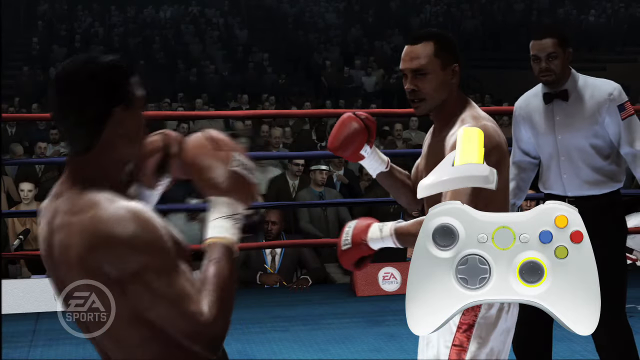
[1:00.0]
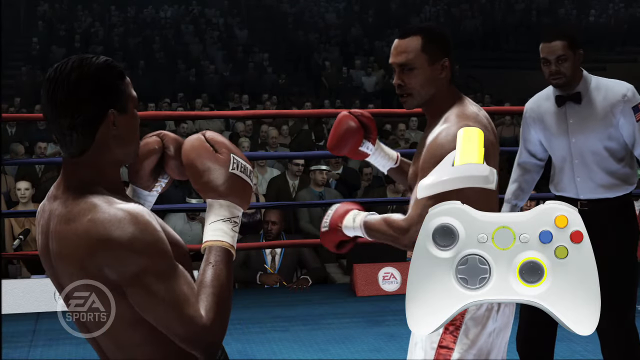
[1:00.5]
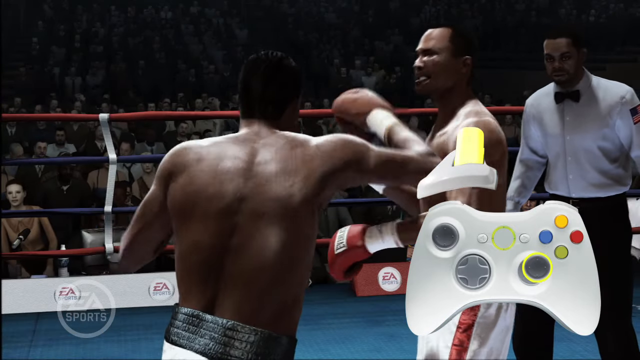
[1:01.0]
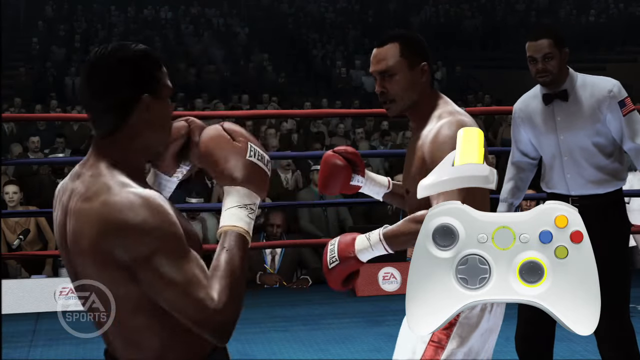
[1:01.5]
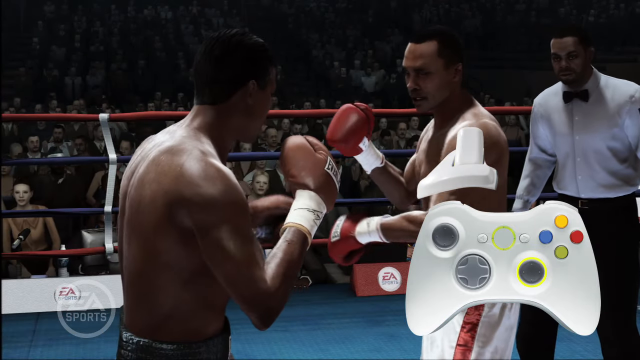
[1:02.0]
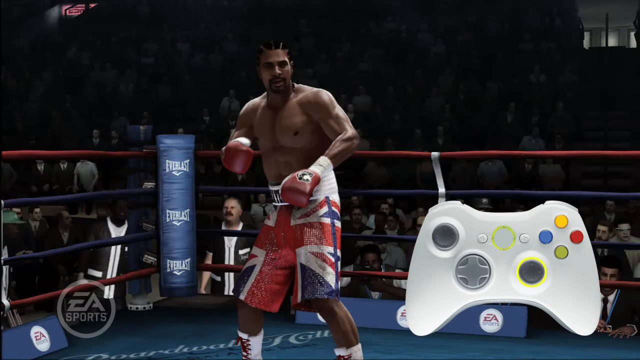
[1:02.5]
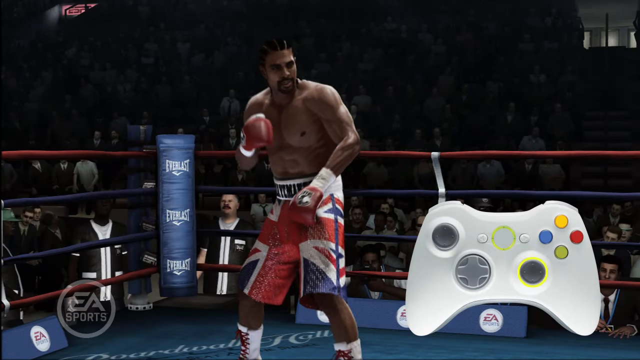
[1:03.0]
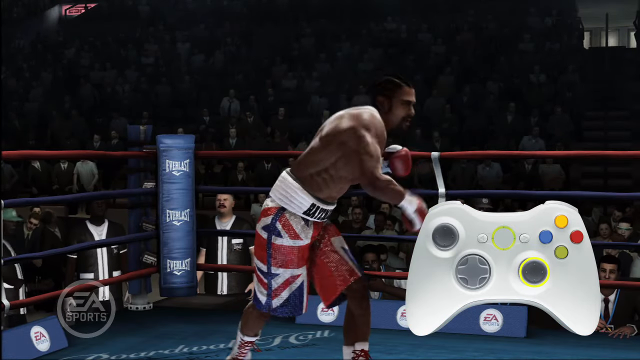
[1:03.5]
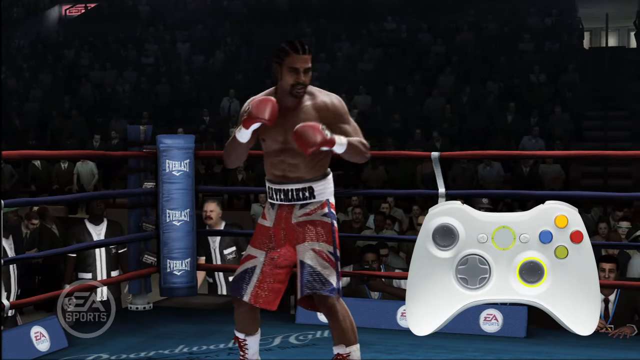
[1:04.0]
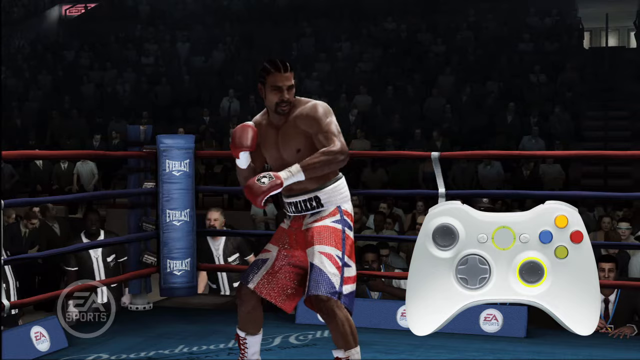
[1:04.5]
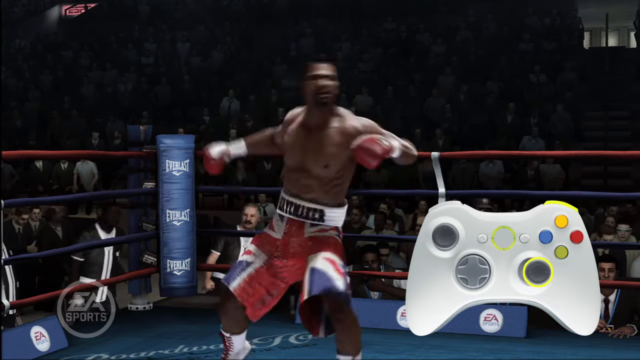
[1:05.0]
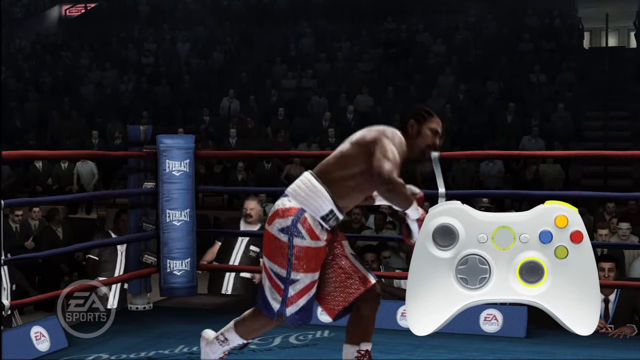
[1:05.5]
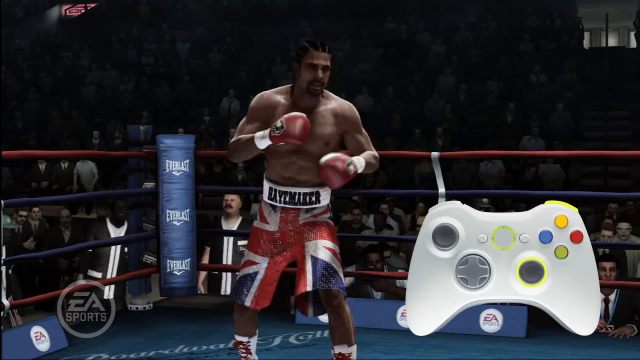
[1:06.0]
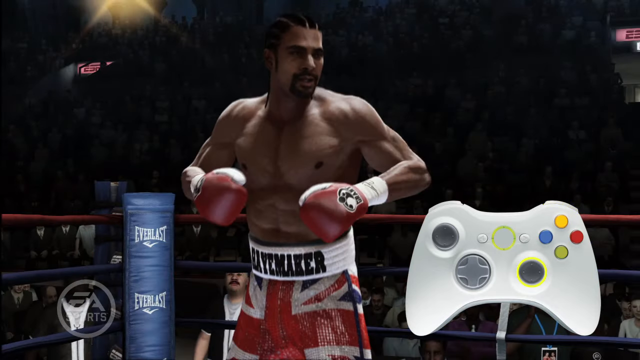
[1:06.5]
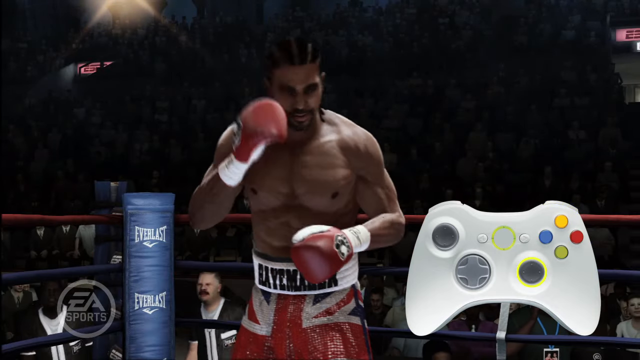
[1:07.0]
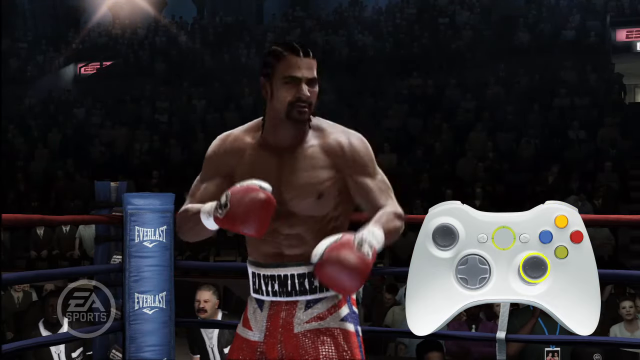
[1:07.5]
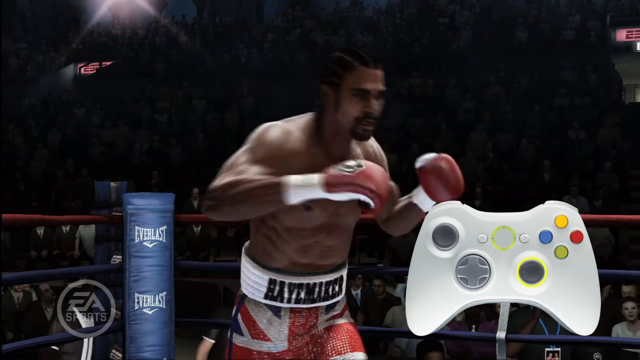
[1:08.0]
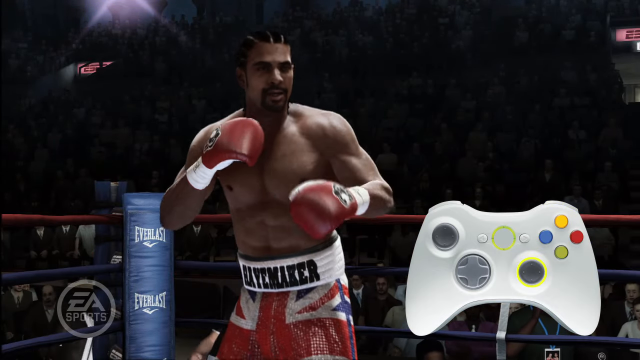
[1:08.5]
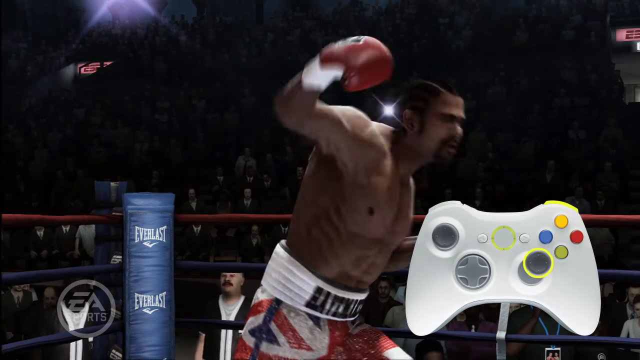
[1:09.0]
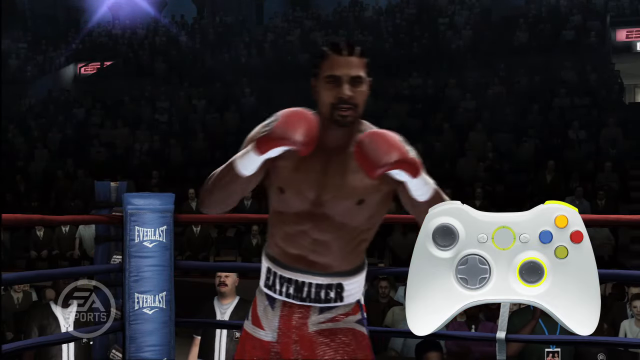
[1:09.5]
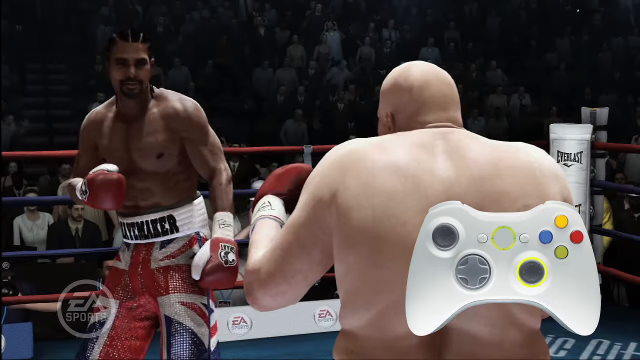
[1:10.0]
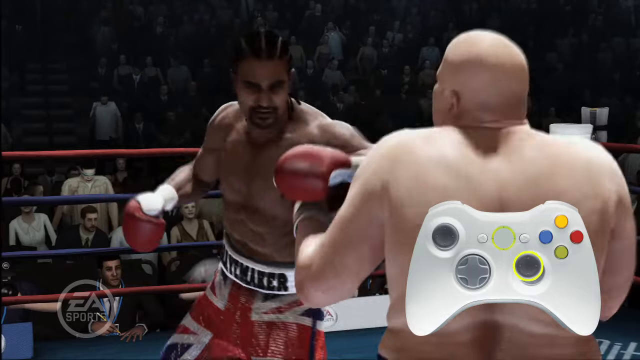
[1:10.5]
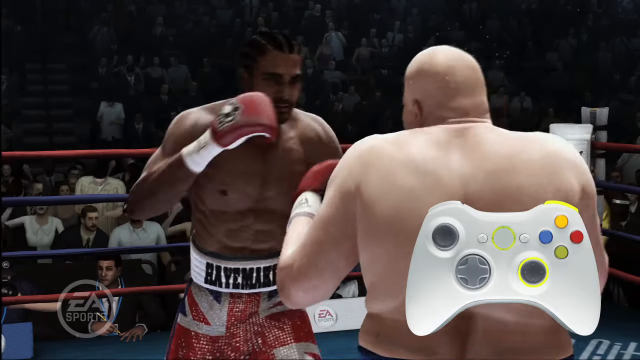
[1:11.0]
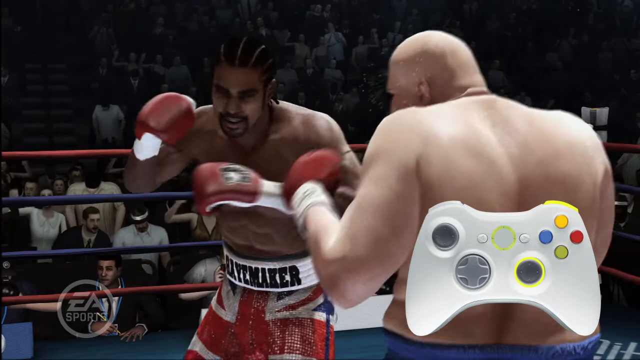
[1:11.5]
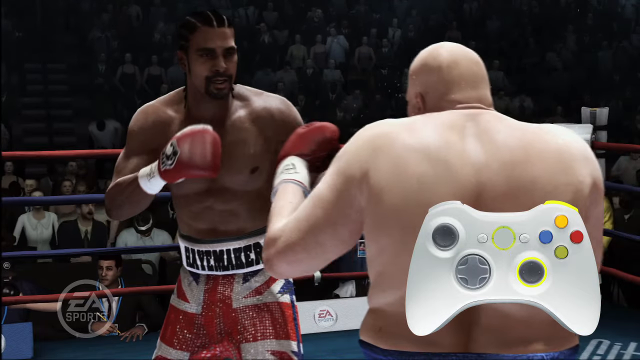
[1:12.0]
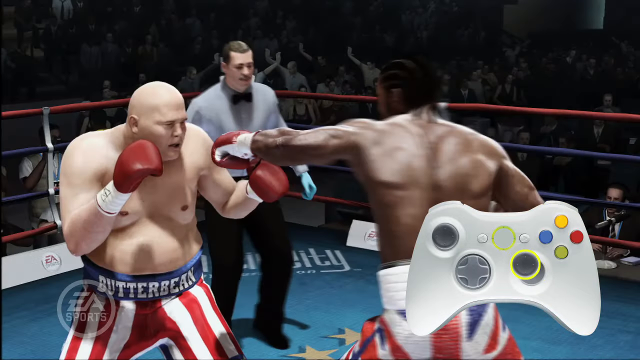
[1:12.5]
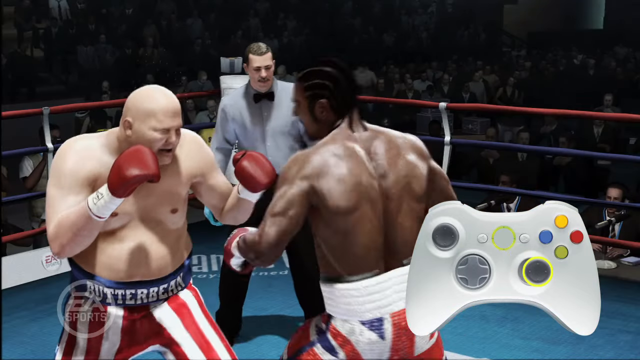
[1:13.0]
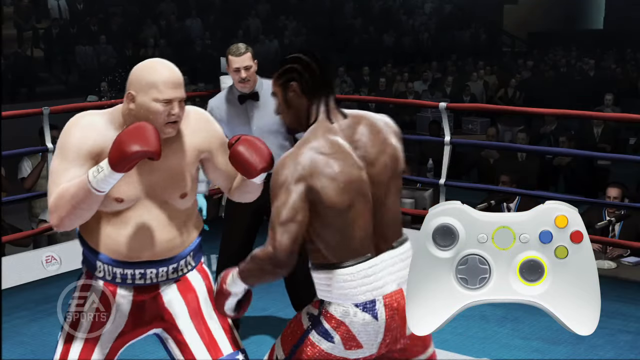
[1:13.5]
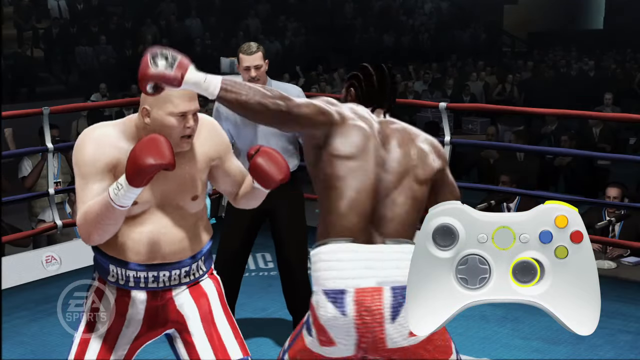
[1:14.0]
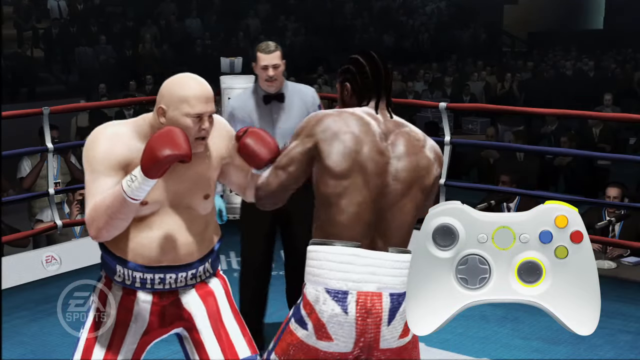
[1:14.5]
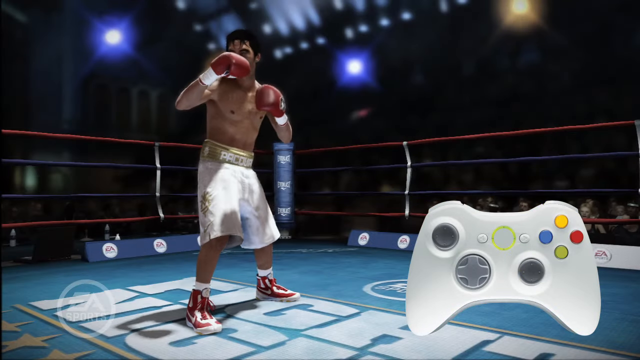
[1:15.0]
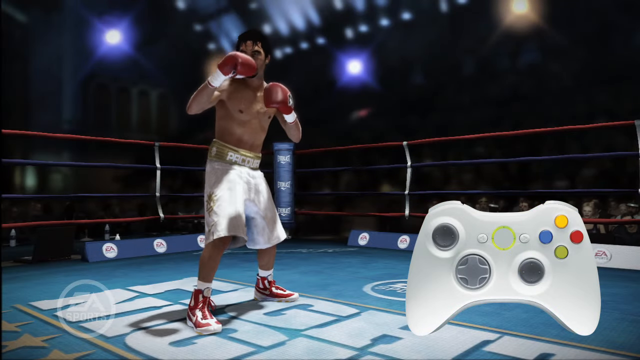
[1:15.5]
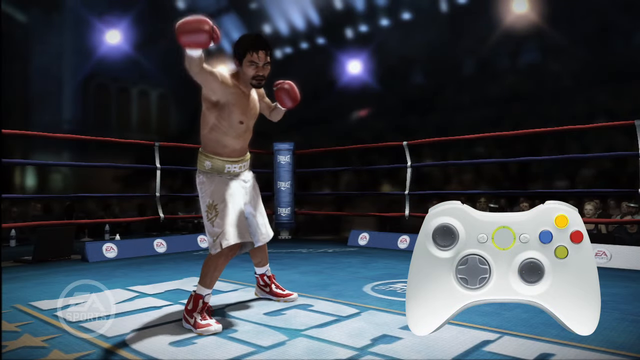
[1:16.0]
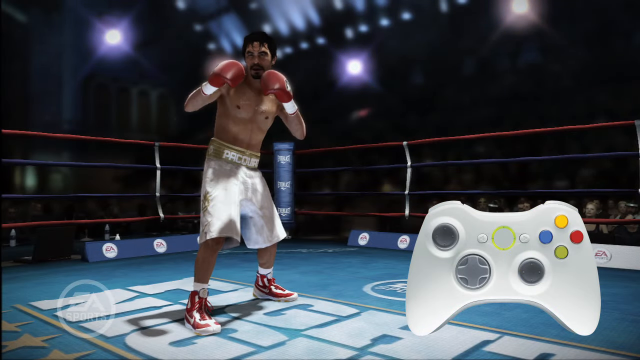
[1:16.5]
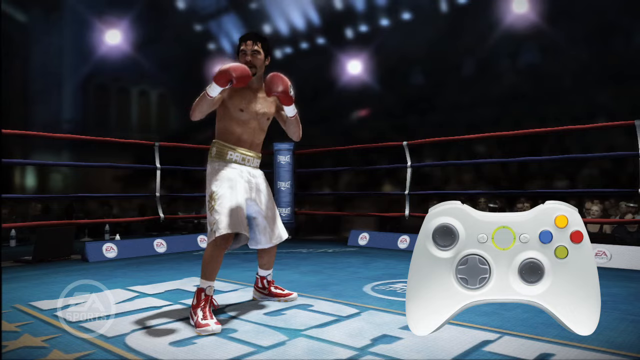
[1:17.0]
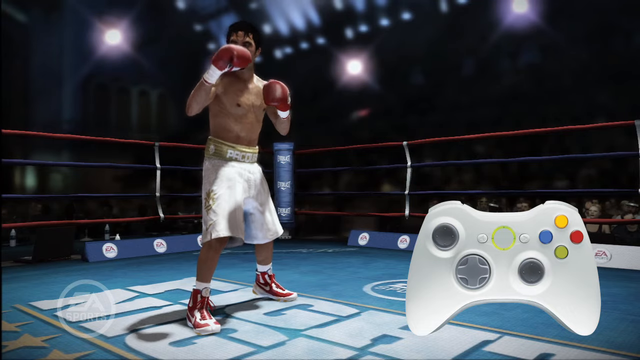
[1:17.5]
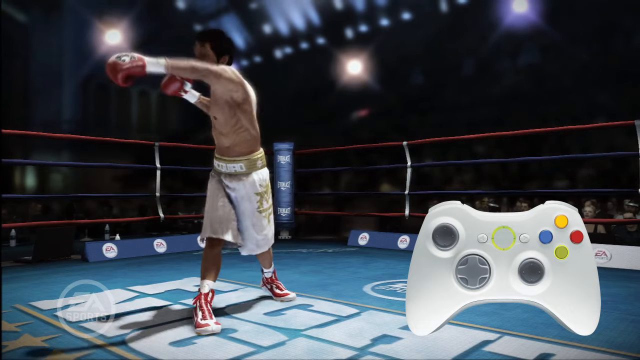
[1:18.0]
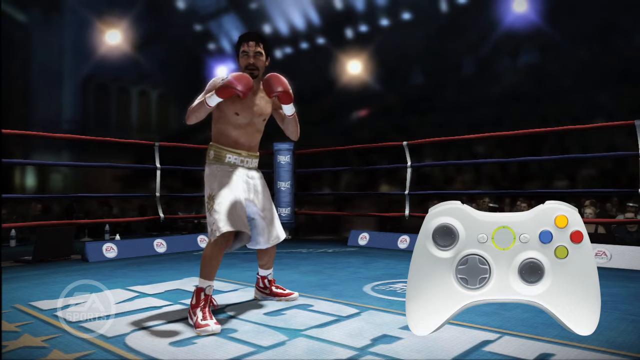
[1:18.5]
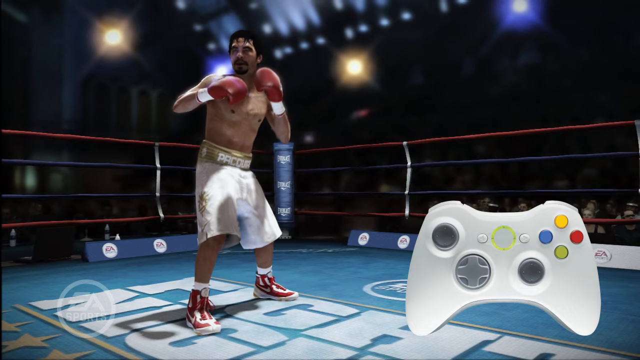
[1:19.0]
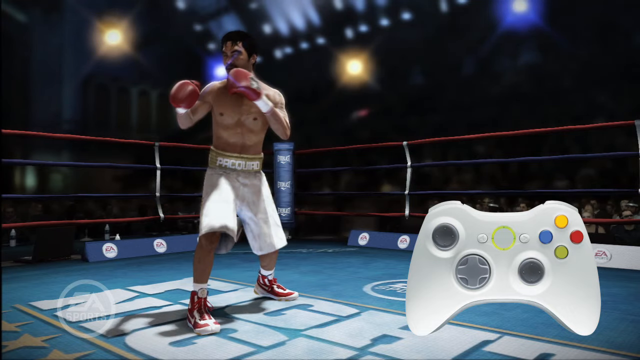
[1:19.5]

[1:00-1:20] The Xbox controller continues to show how to make the various moves: there is an image of the controller itself and a small image above it of the left joystick being pressed. The left joystick image disappears, leaving only the controller. The player makes moves that correspond to the moves shown on the controller. The man in the British pants, whose top band reads "HayeMaker", throws punches in relation to the controller against the heavier white man; the punches hit his face, turning his head to either side from the impact. The video keeps cycling through the players already shown, and the player in white pants and red and white shoes comes back on screen, throwing more punches in relation to the controller.